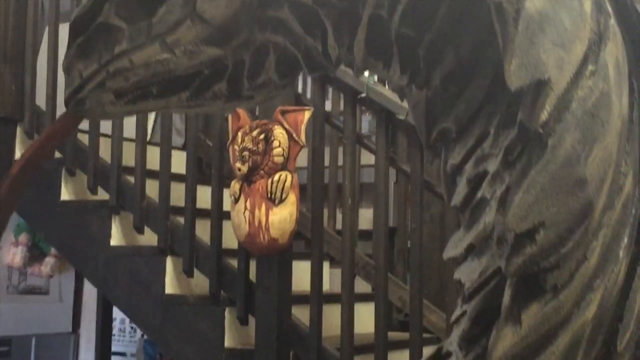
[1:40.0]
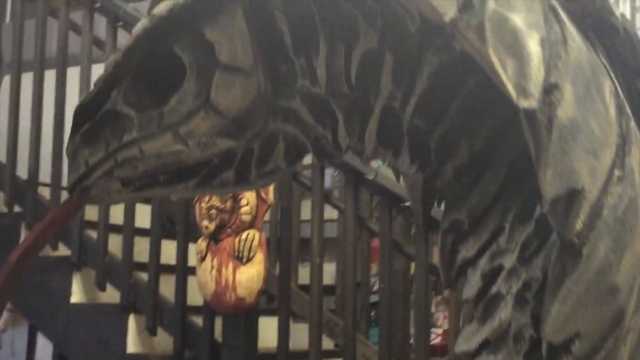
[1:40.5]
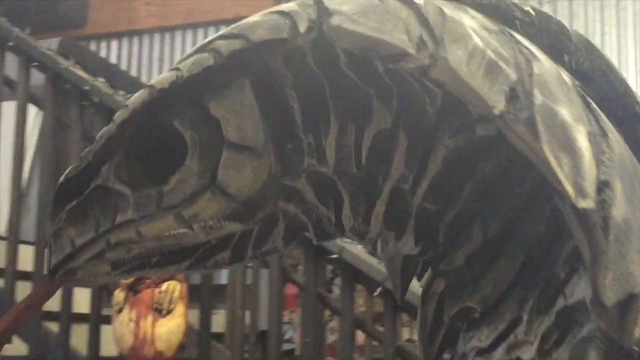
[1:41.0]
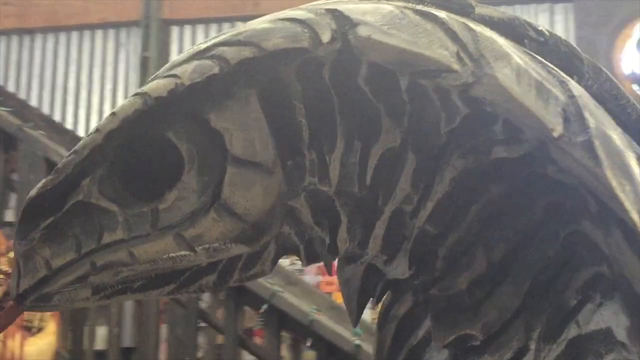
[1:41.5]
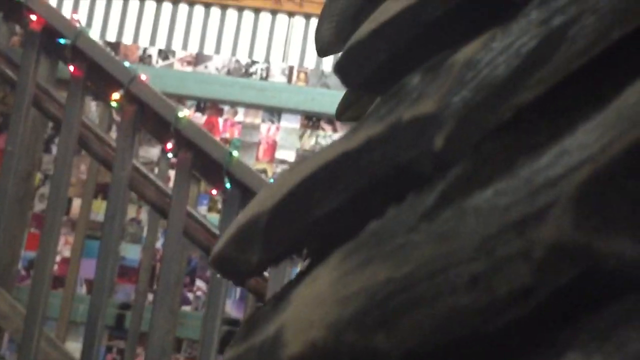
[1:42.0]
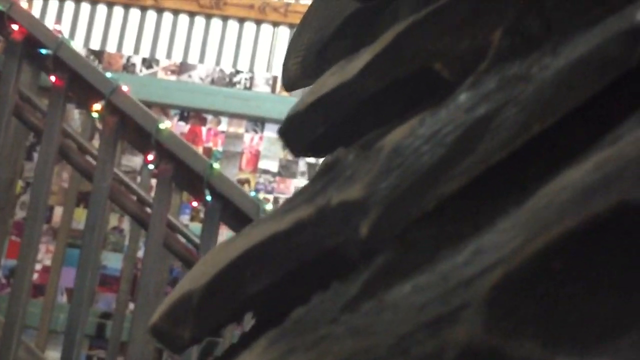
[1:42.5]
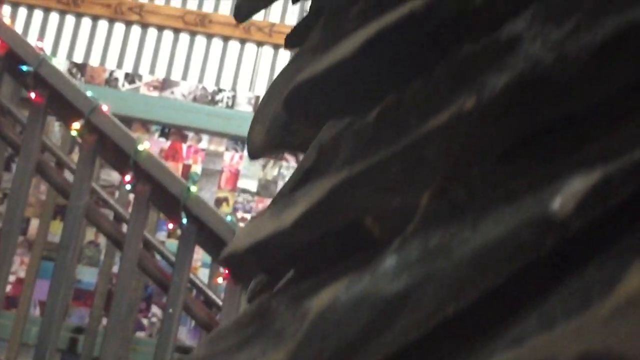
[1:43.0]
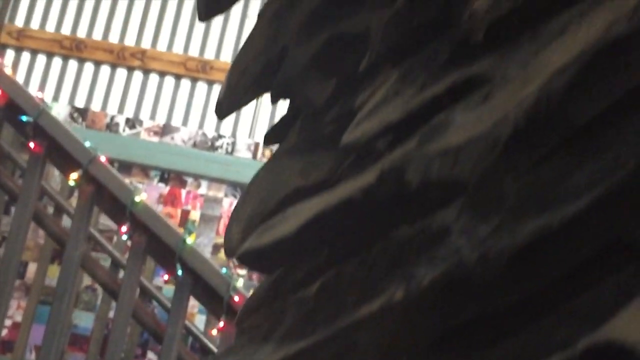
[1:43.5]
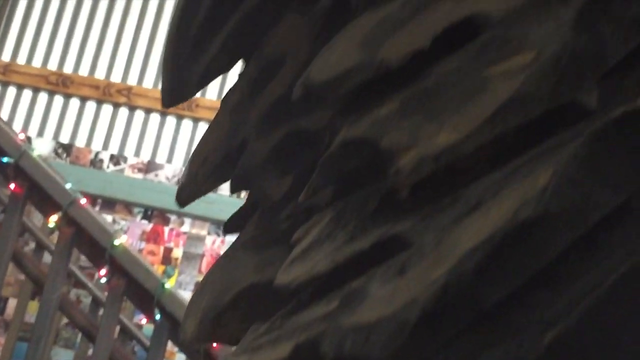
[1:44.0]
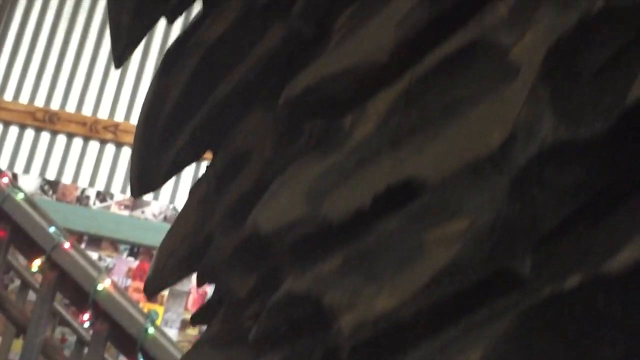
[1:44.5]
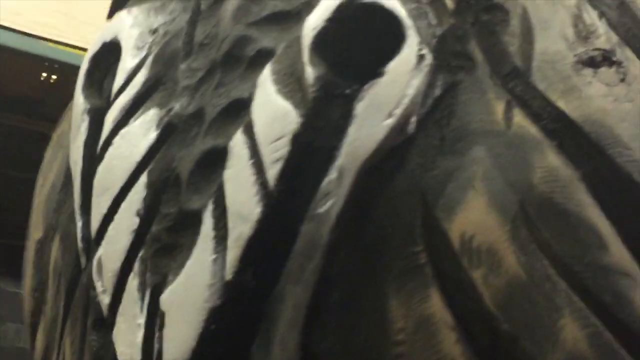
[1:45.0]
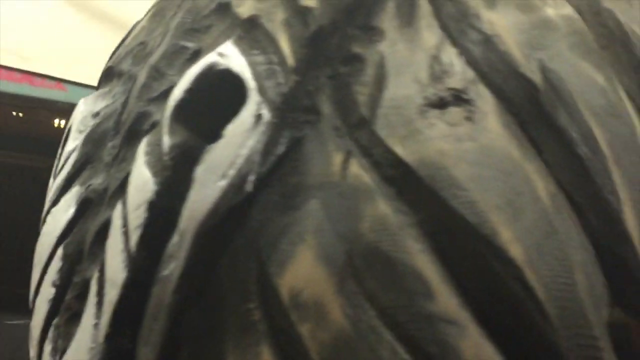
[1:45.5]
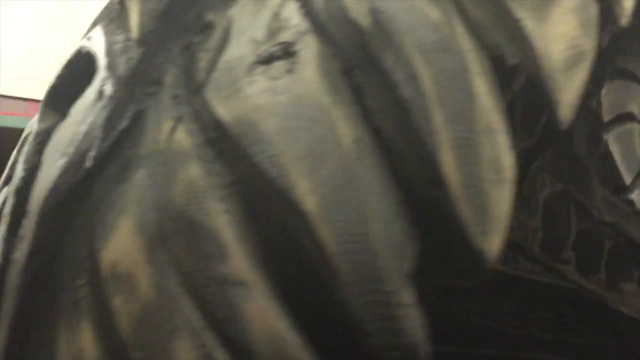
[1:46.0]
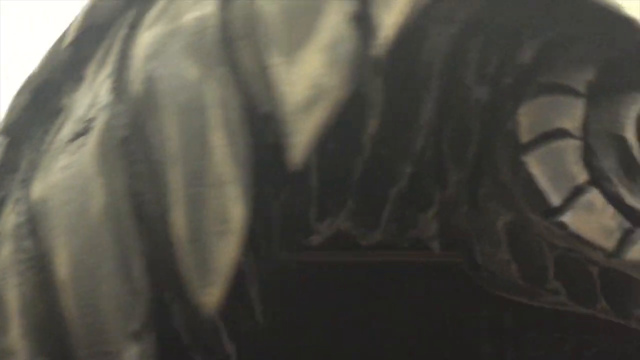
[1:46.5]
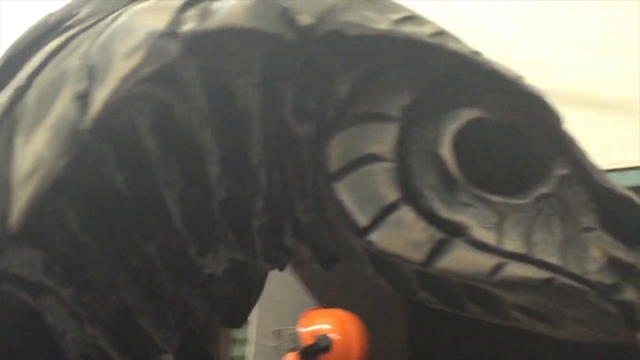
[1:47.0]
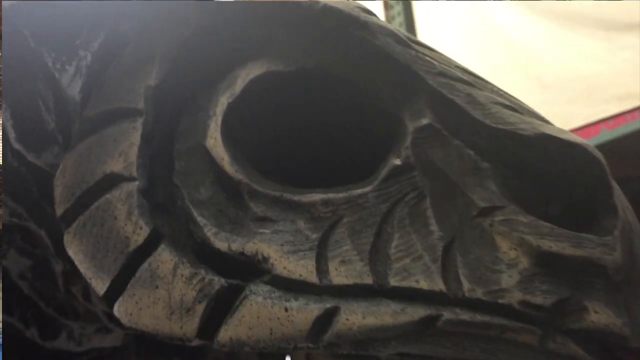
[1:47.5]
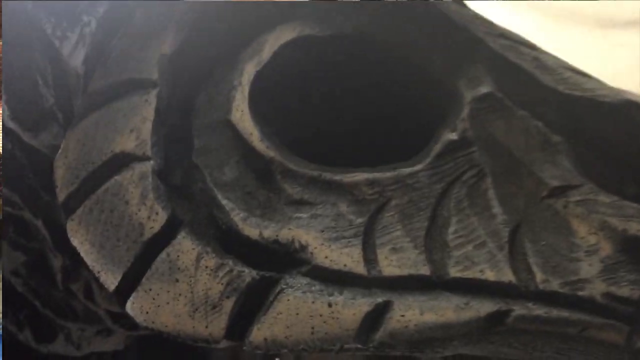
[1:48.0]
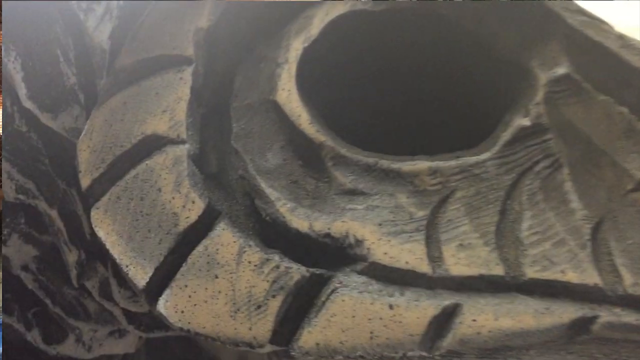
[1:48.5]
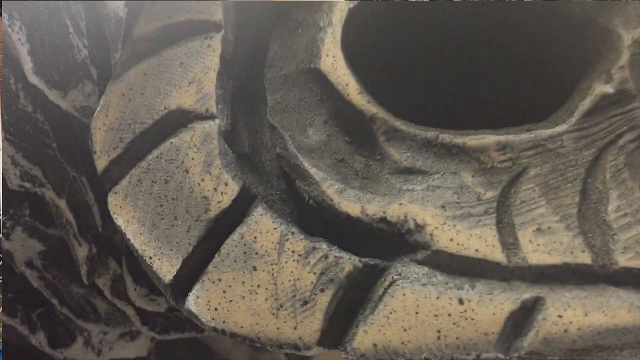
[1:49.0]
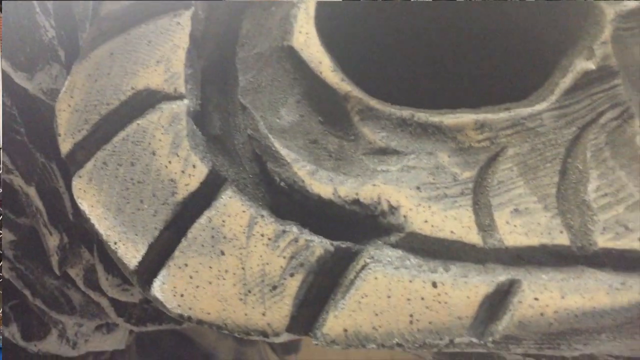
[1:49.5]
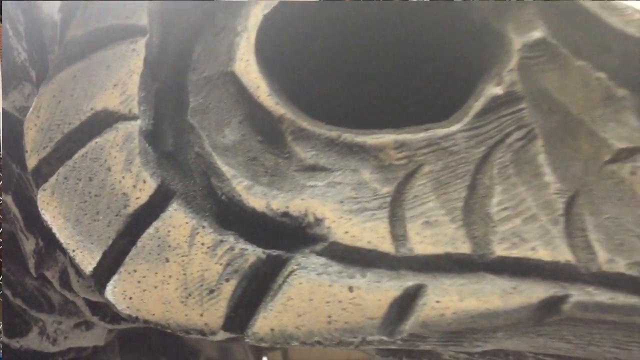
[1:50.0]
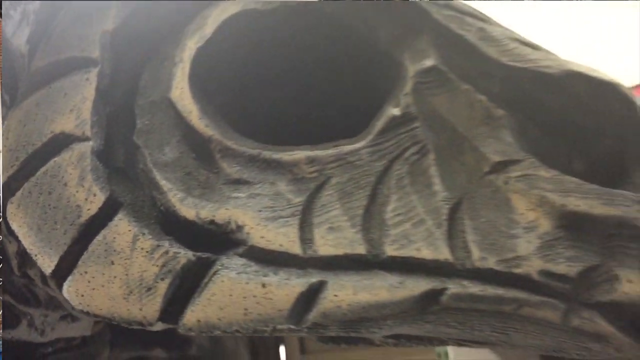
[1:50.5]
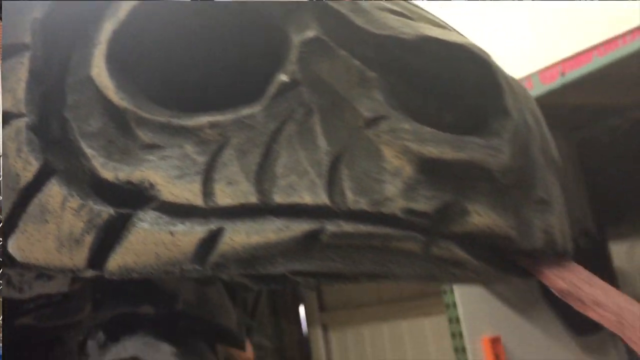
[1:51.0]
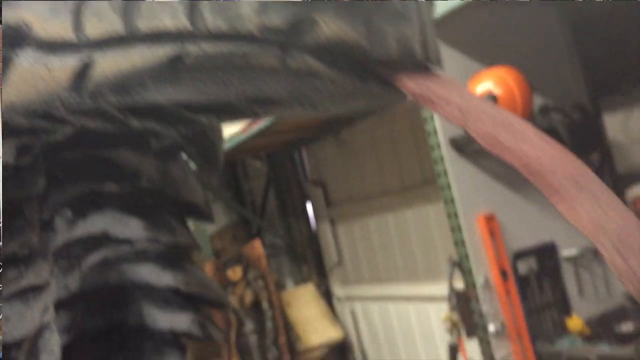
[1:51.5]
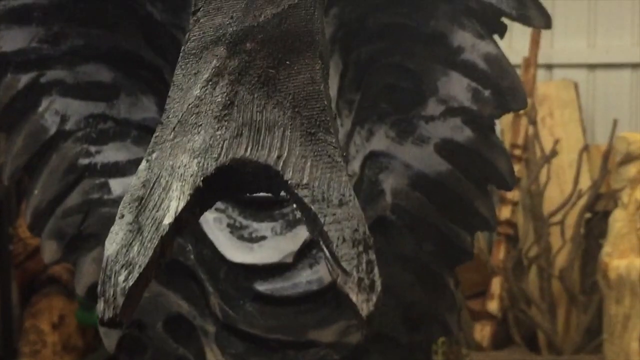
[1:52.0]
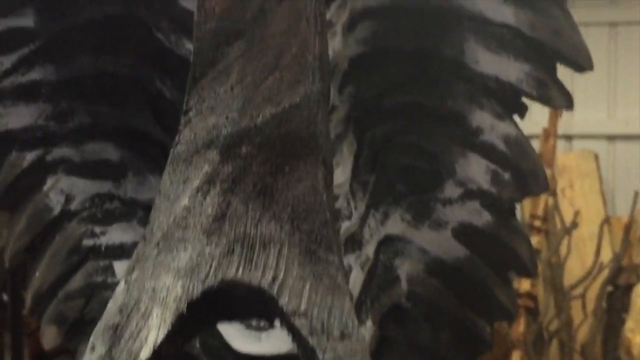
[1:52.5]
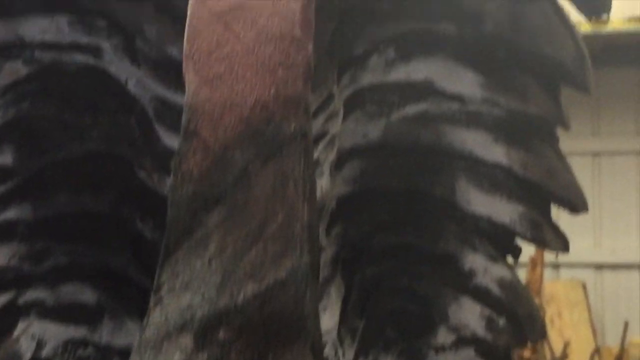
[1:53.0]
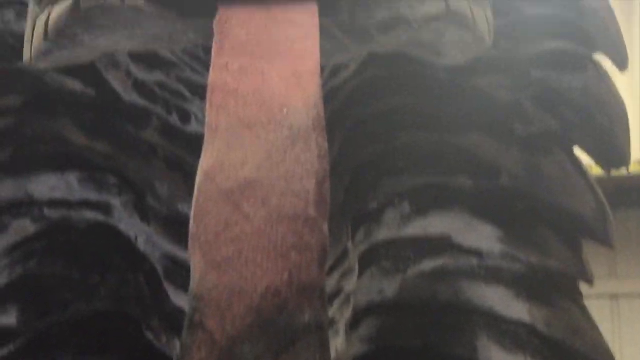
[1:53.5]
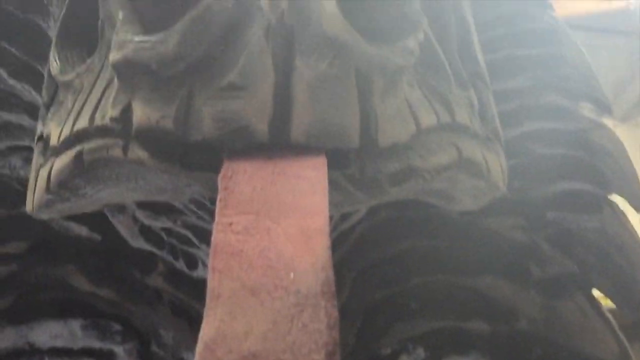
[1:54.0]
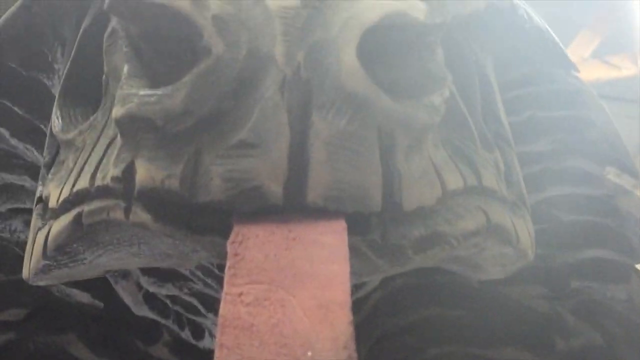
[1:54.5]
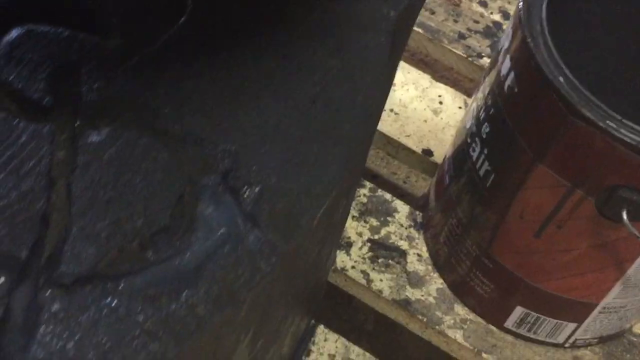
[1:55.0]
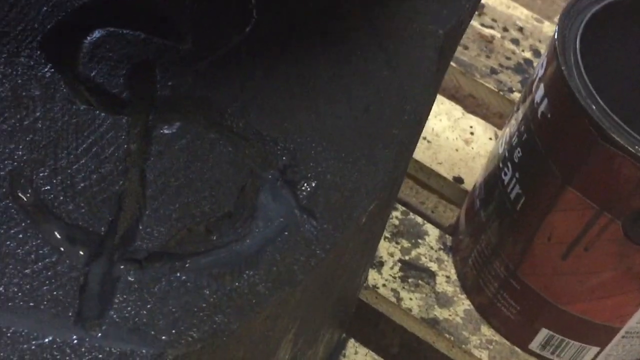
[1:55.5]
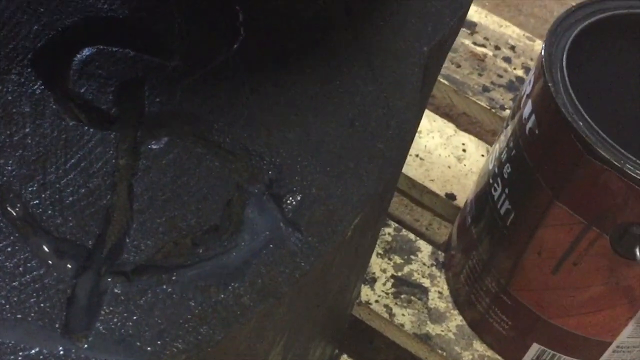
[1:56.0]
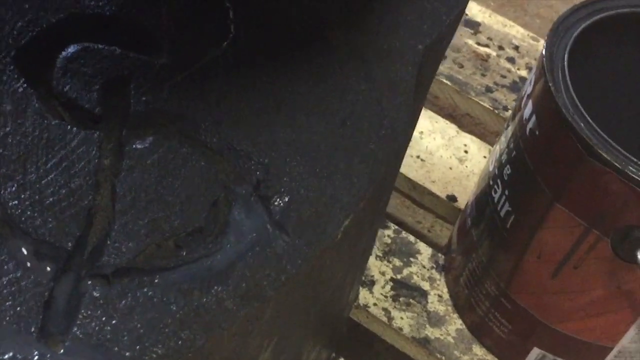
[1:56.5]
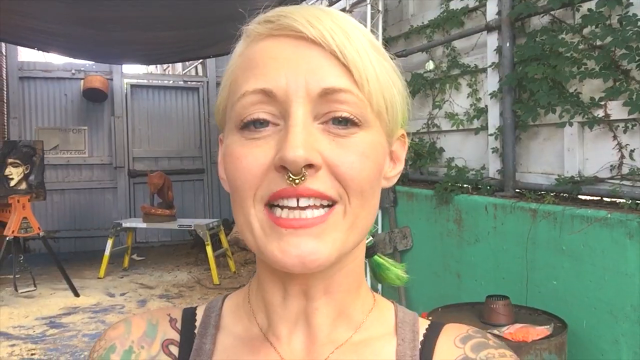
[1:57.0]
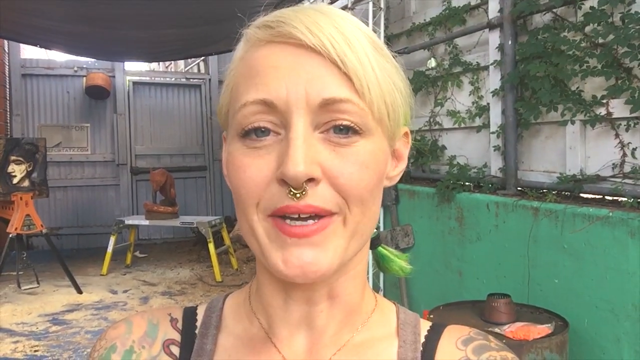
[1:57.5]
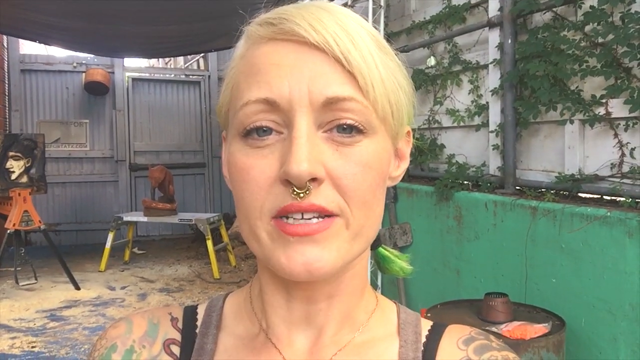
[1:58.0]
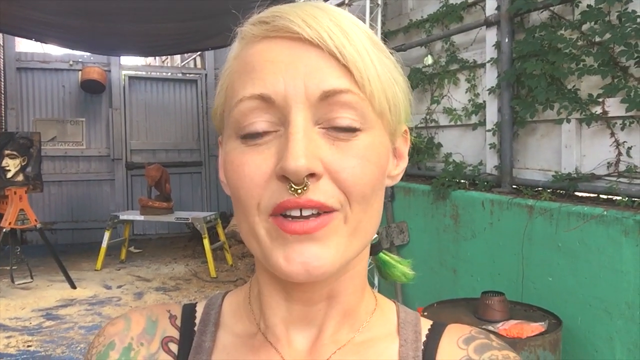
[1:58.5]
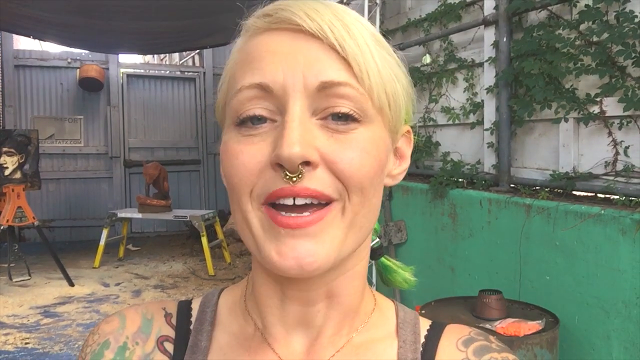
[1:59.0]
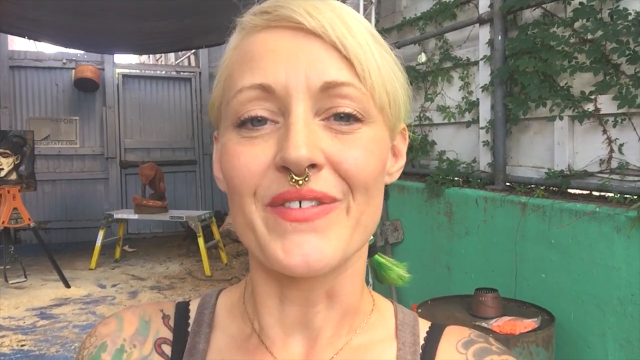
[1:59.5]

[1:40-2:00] The camera pans up the side of the snake's profile and round to its face, then shows an extreme close-up of the carvings and fine detail. A close-up of the eye shows it accentuated with whites and greys; the carving makes the eye prominent so that it stands out from the face, and it starts to glisten as the light hits it. The camera pans down towards the tongue, whose end is black and shows wood carving marks; as the camera pans up, the tongue goes from black to red. At the end of the mouth, looking upwards, the nostrils are visible. The video cuts back to the woman in the garden, smiling and talking to the audience on a sunny day.